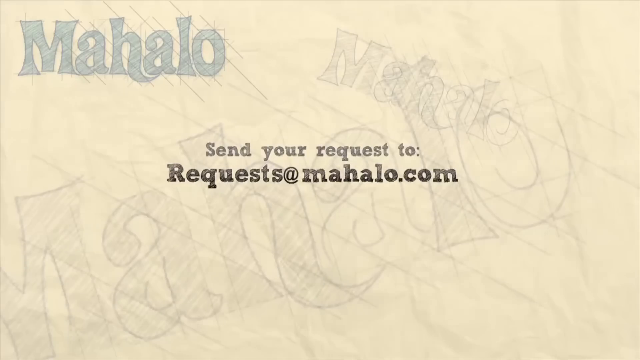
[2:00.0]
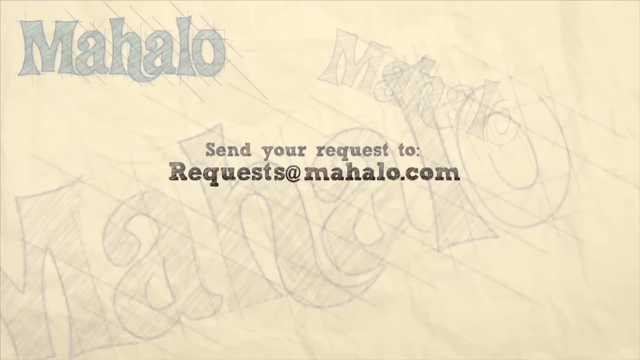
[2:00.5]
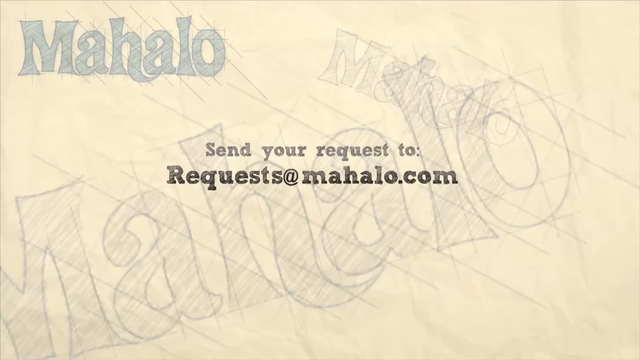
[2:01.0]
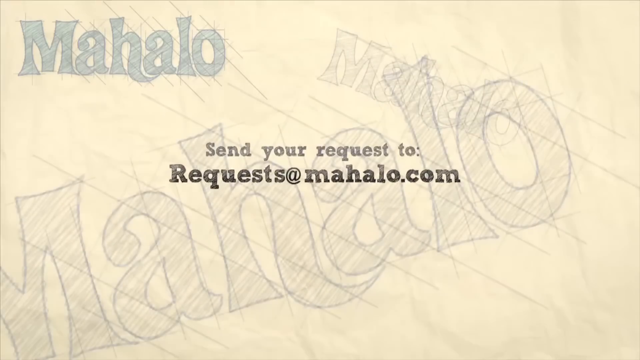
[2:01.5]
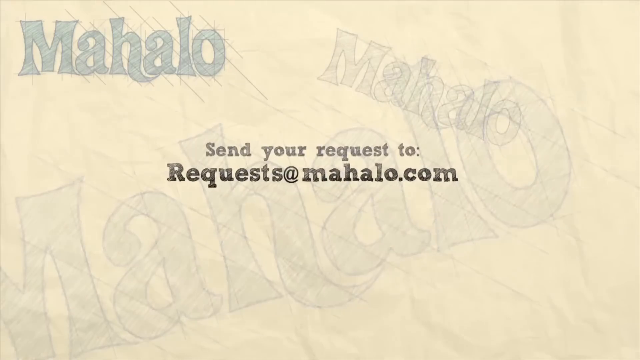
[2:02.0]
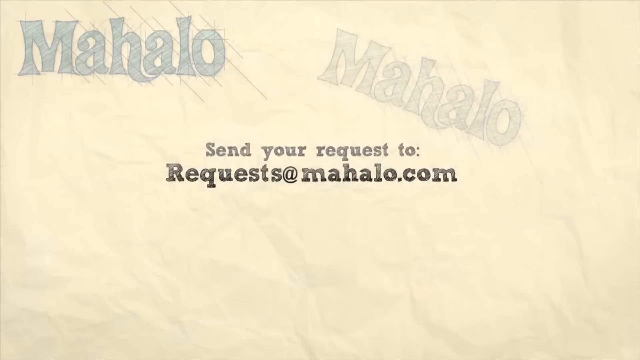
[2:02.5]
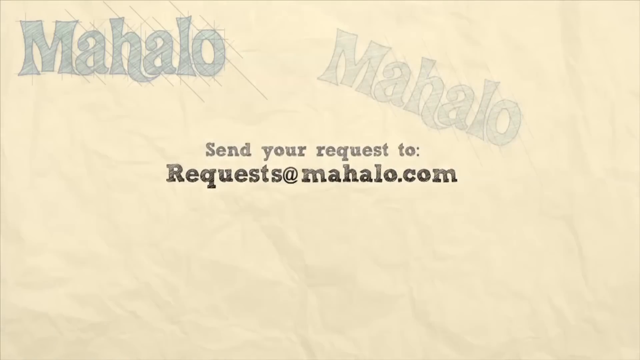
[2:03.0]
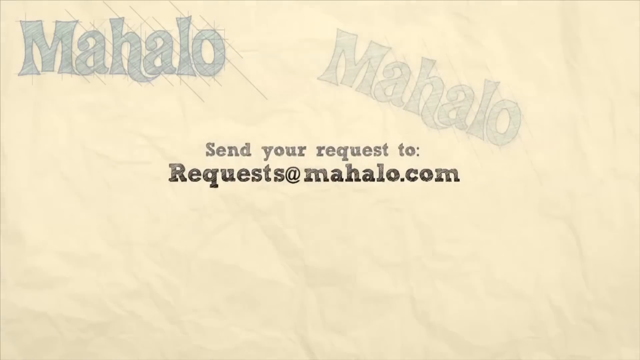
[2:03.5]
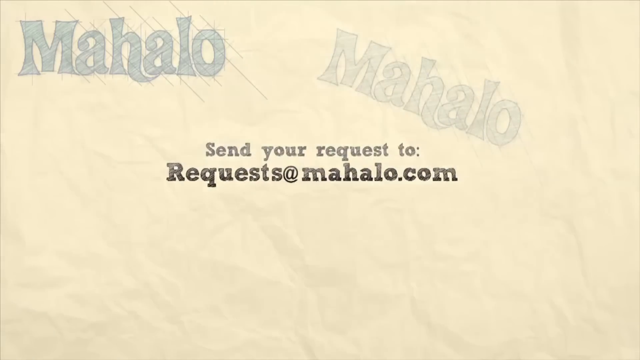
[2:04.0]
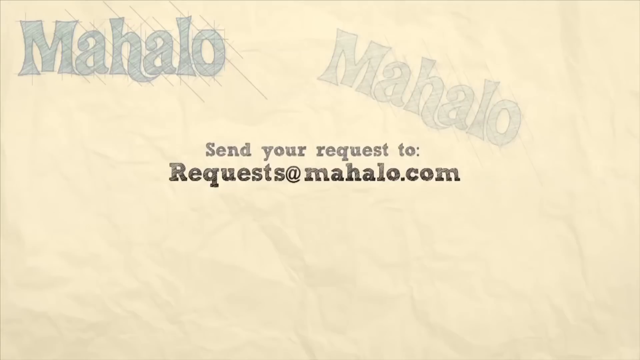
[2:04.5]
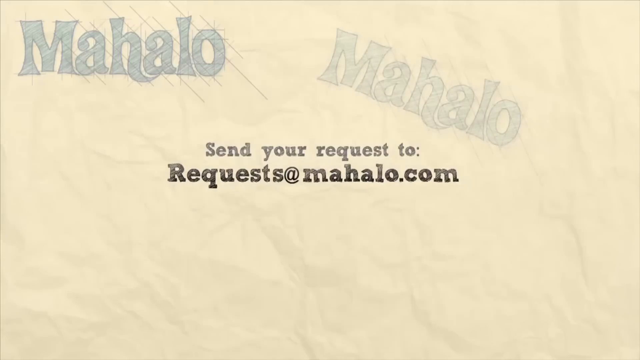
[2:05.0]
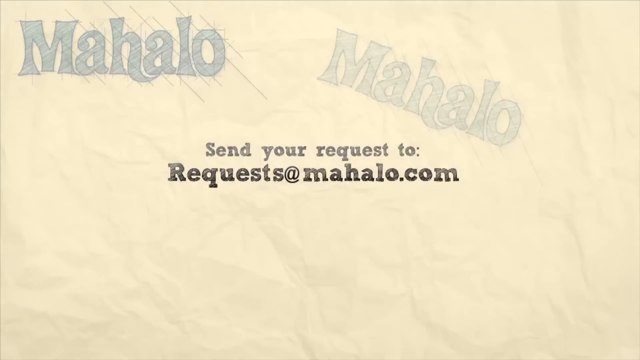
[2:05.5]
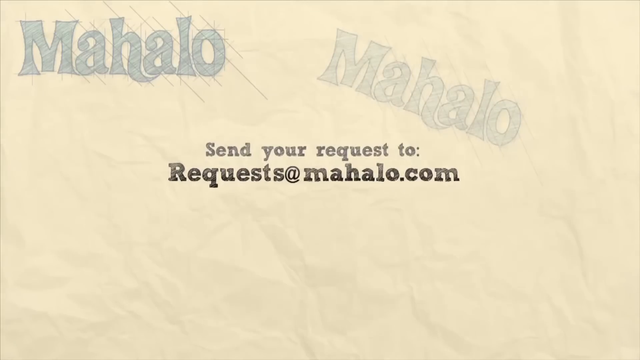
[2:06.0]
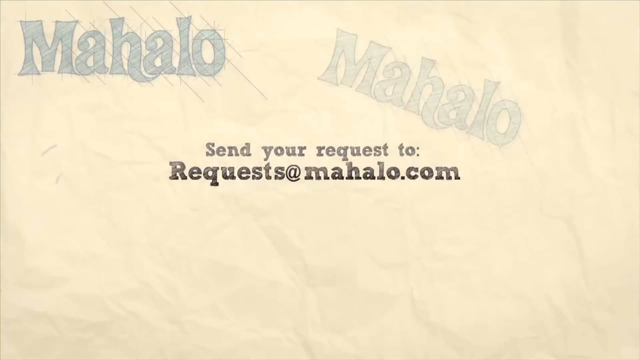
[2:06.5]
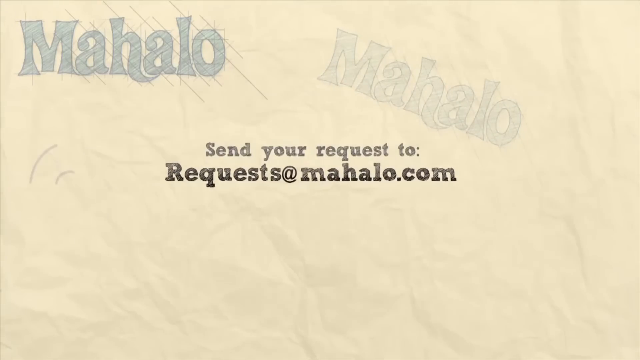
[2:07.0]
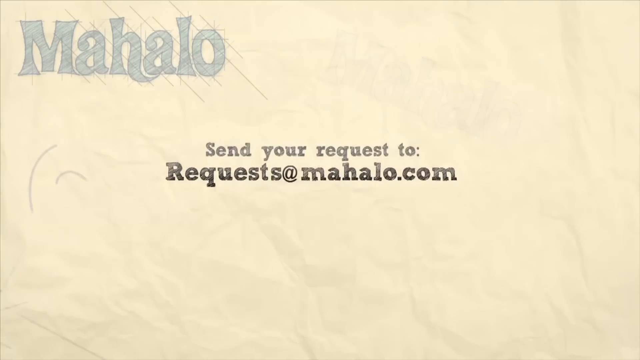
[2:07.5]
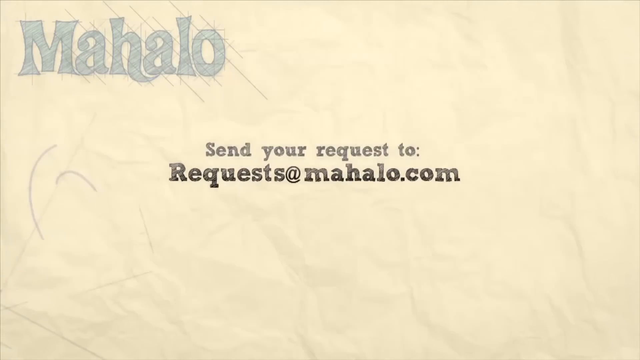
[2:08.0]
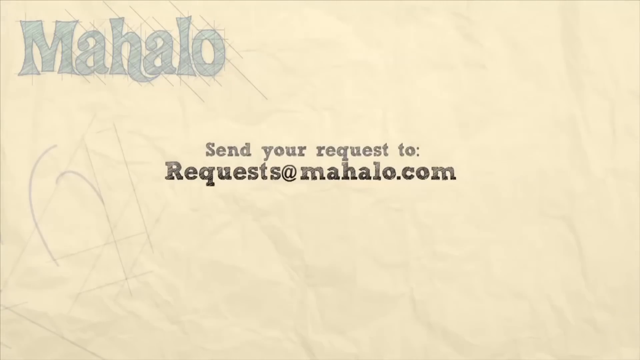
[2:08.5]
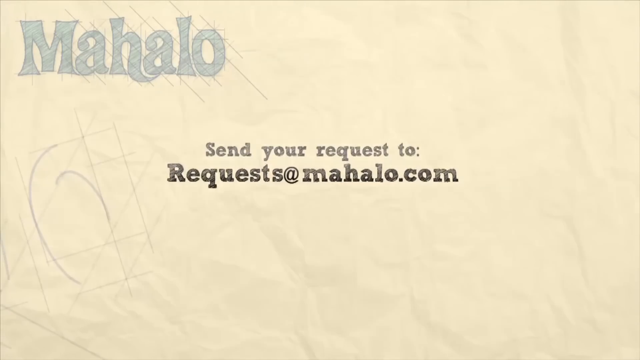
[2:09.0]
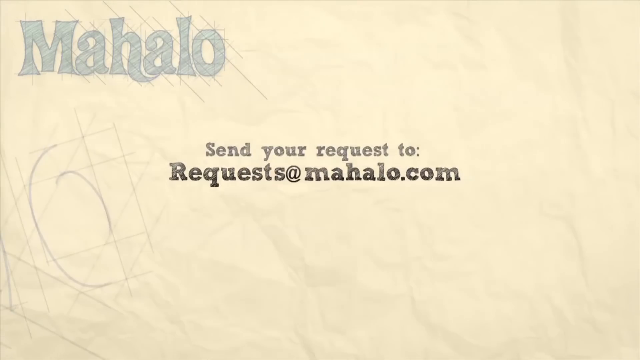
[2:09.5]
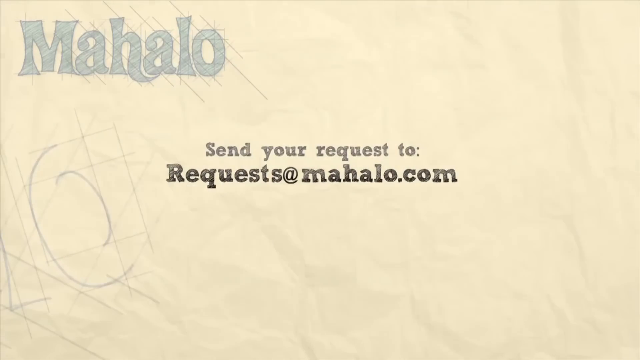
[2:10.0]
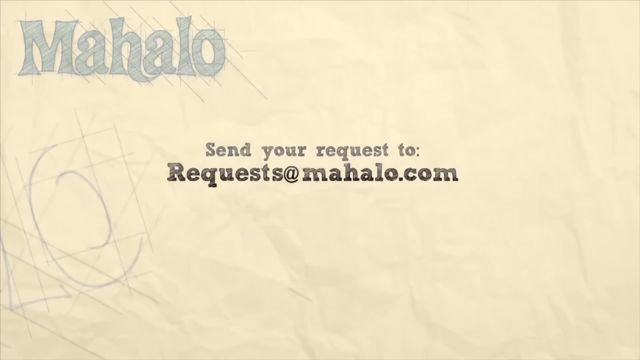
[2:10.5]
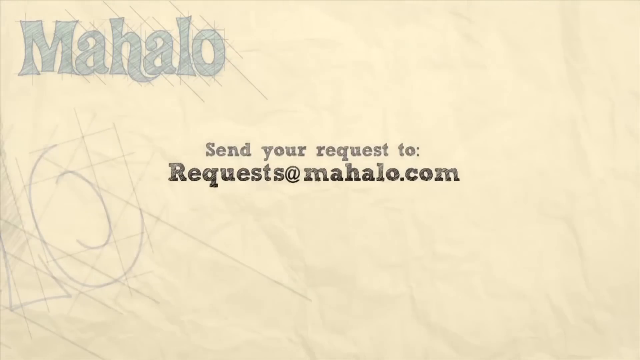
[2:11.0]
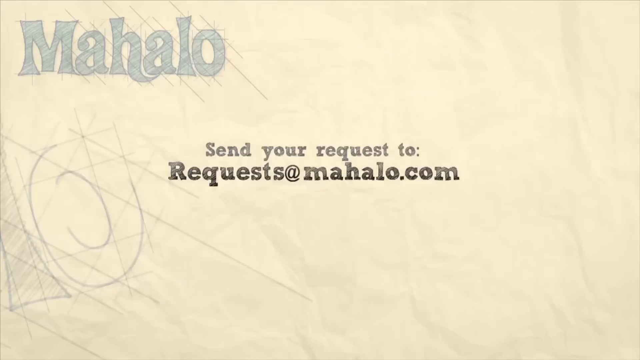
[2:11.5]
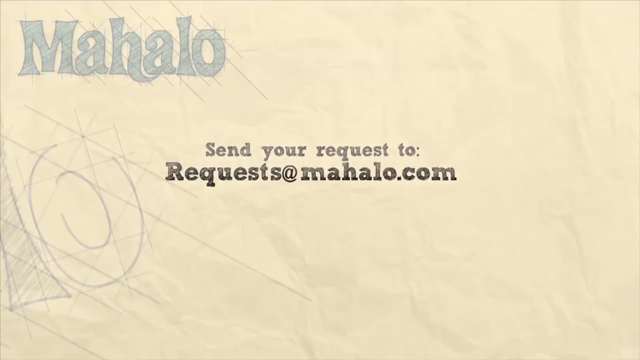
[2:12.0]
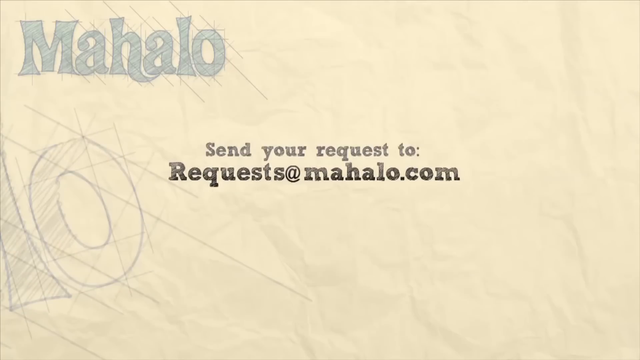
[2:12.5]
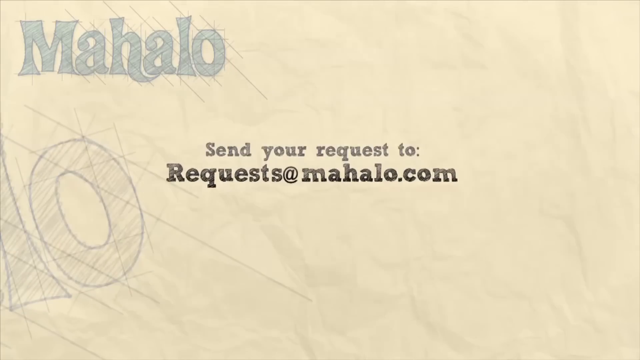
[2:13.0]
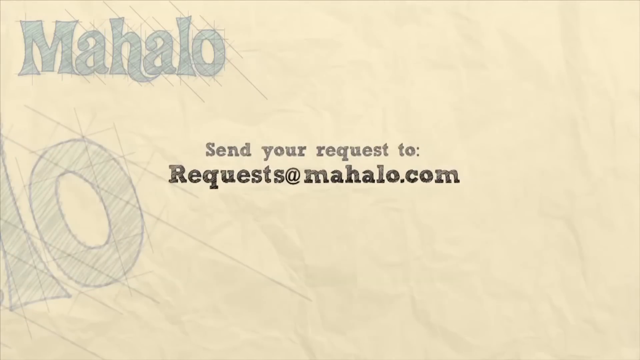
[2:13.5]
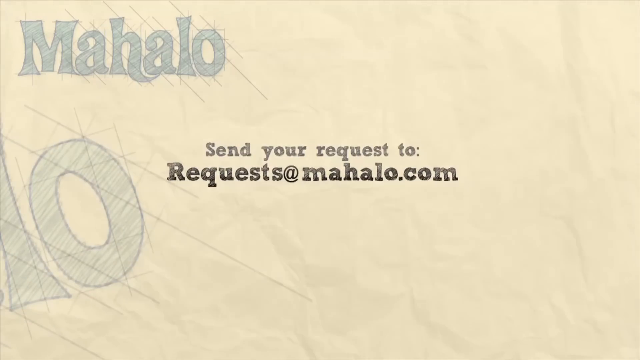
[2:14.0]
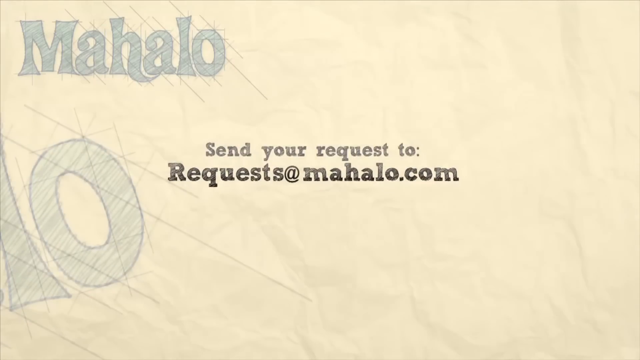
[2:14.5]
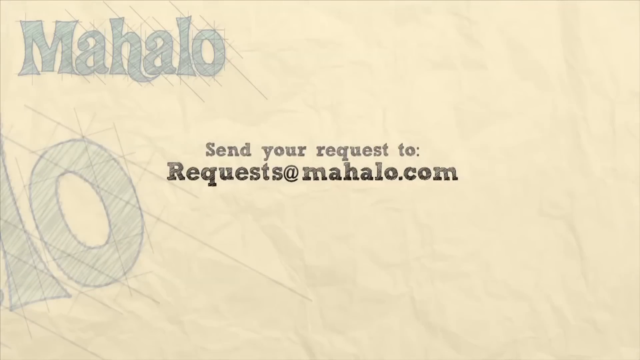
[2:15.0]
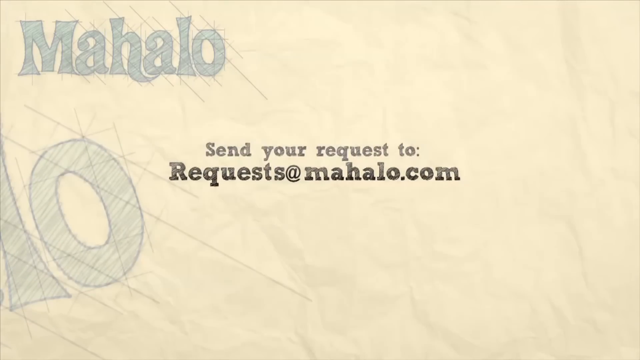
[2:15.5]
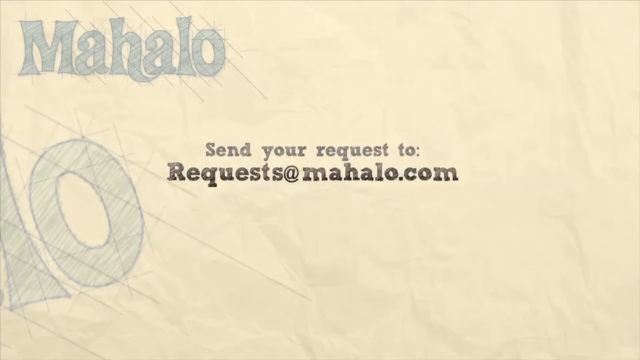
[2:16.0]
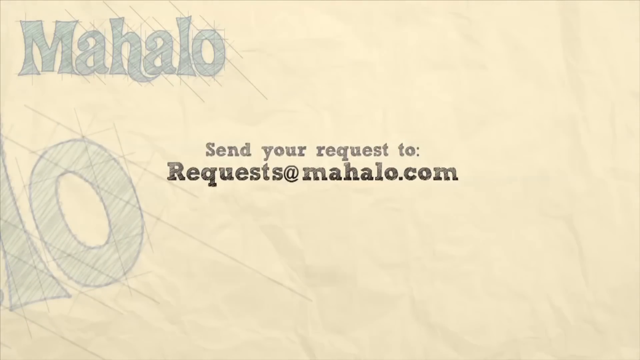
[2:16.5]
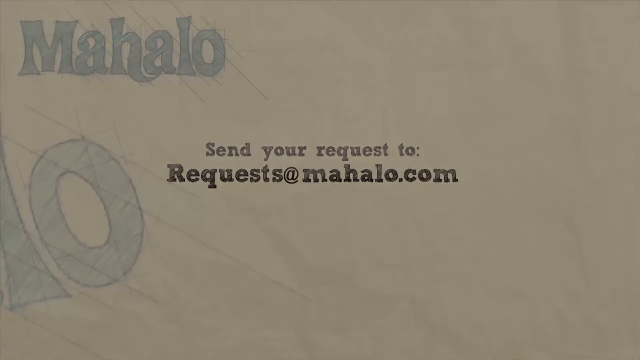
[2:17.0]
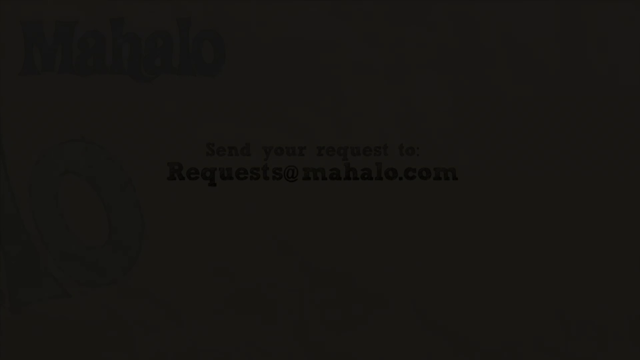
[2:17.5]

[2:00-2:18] The screen stays static as "requests at mahalo" shakes up and down. In the background, a large, more faded-out Mahalo leans slightly toward the bottom left before fading away. To the top right of the email is another, much more faded version, which also fades away. Mahalo then slowly fades in, but only its last two letters, L and O, fading in slowly before fully rendering; it is still a more faded color than the top-left version. In the text in the middle, "send your request to" is on the first line in a slightly lighter black, while the email itself is a little larger and blacker. In the last second of the ending screen, everything goes to black: the black seems to fade in from the corners, though this may just be how it looks, as everything gets dimmer and then turns black.